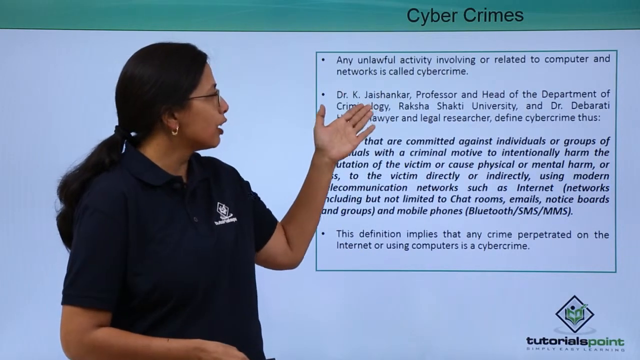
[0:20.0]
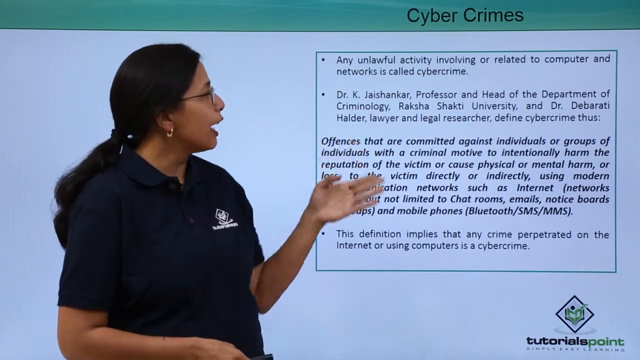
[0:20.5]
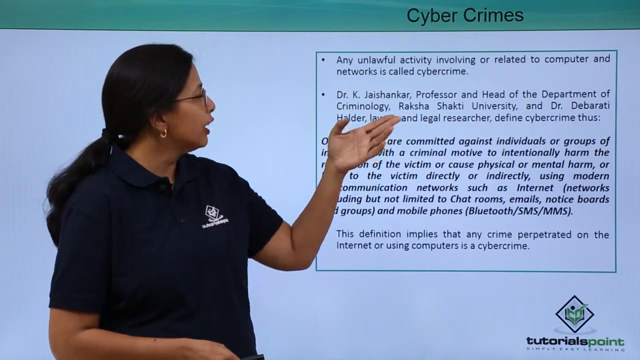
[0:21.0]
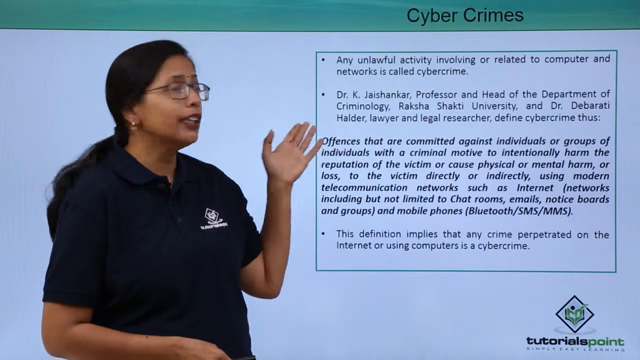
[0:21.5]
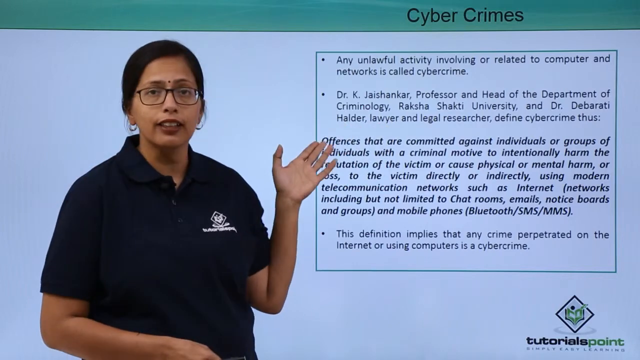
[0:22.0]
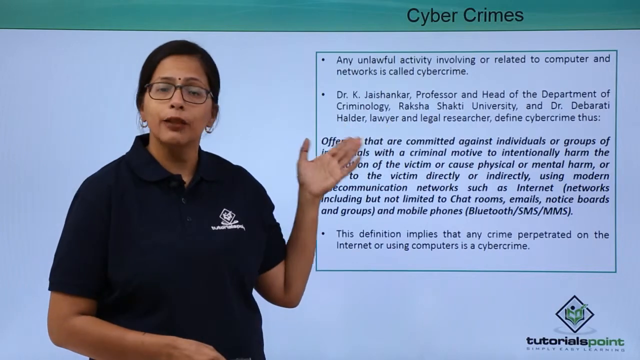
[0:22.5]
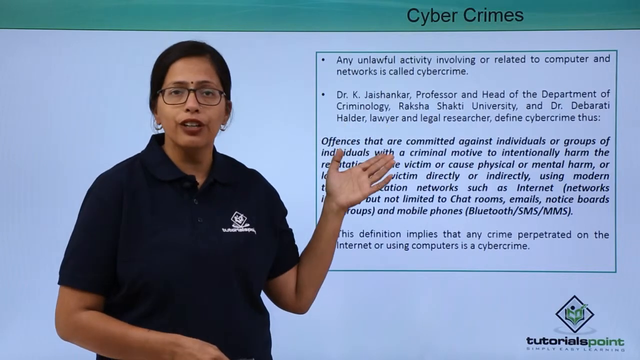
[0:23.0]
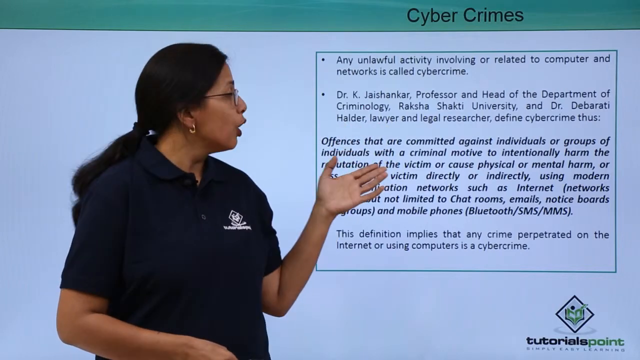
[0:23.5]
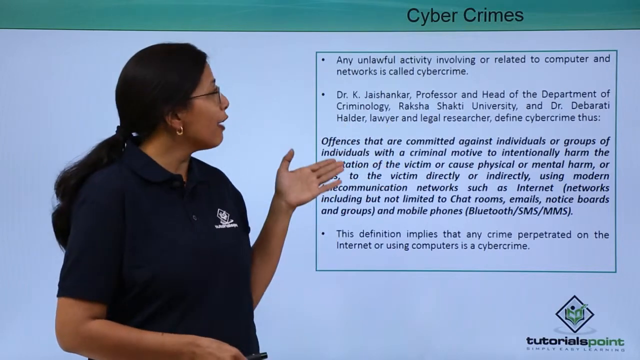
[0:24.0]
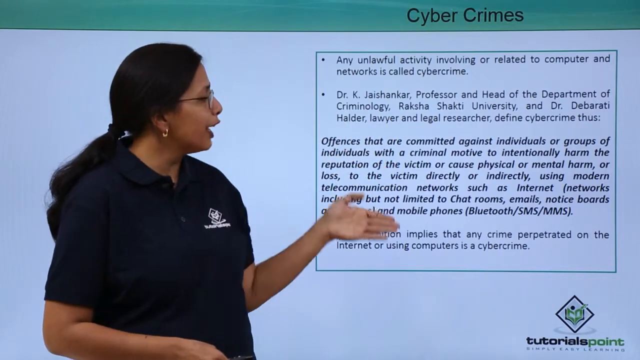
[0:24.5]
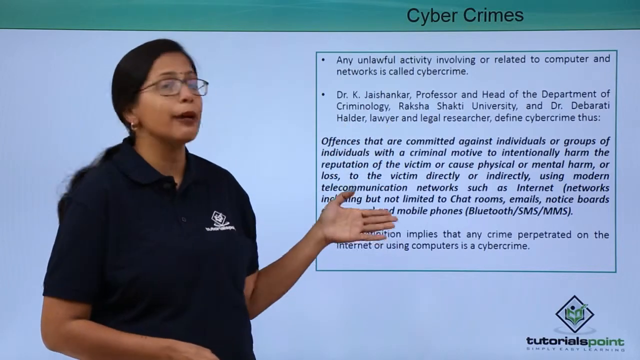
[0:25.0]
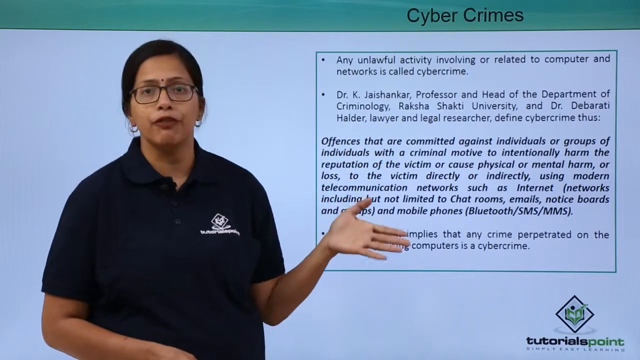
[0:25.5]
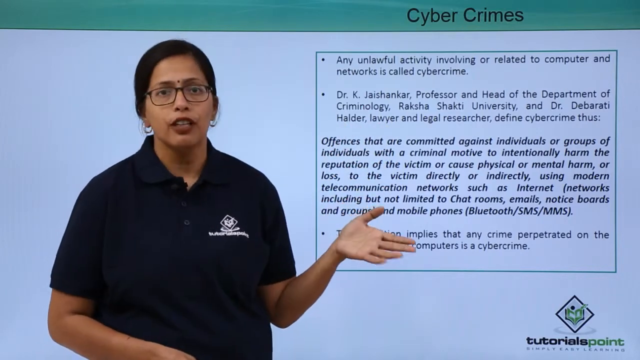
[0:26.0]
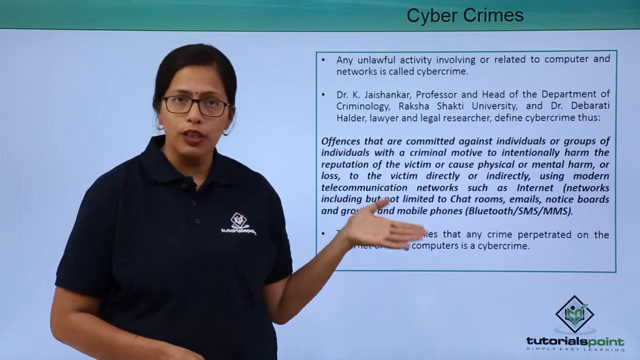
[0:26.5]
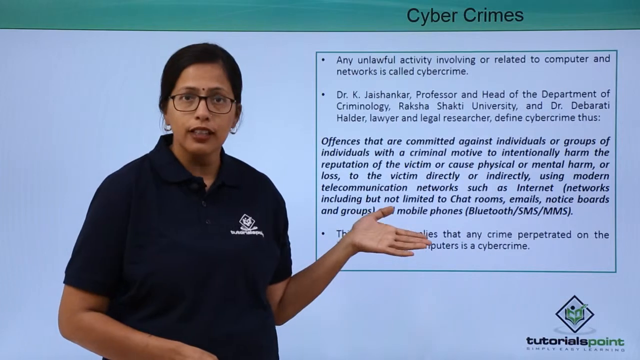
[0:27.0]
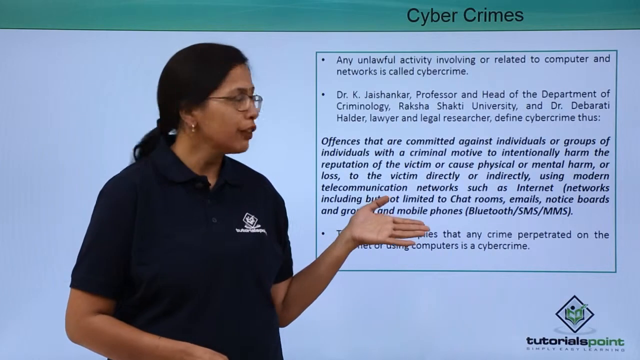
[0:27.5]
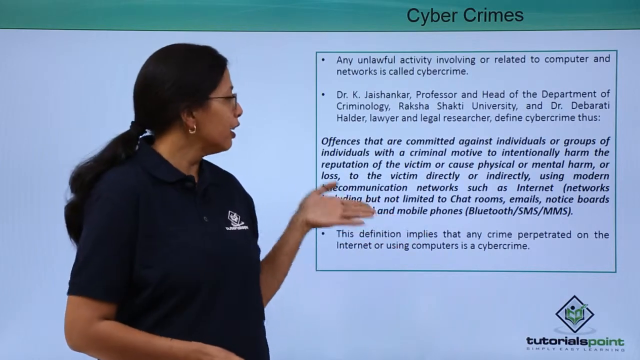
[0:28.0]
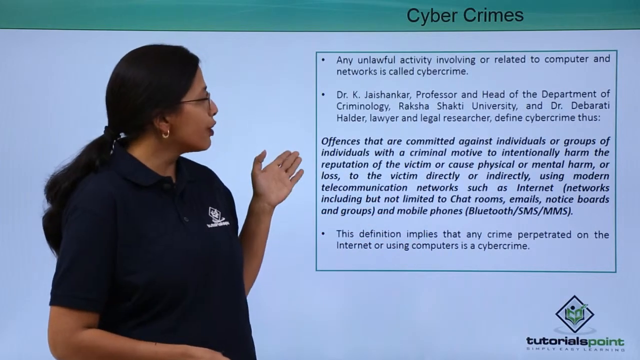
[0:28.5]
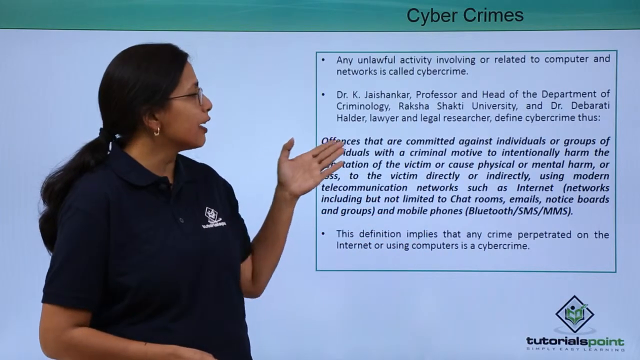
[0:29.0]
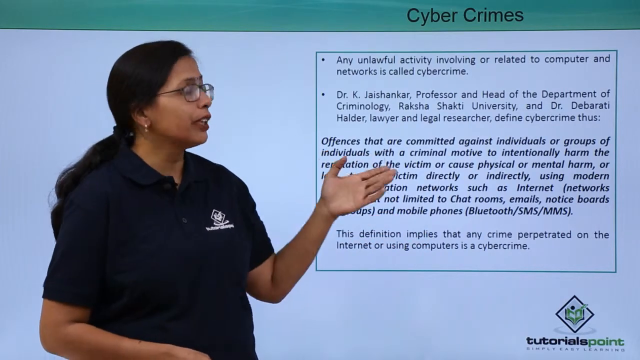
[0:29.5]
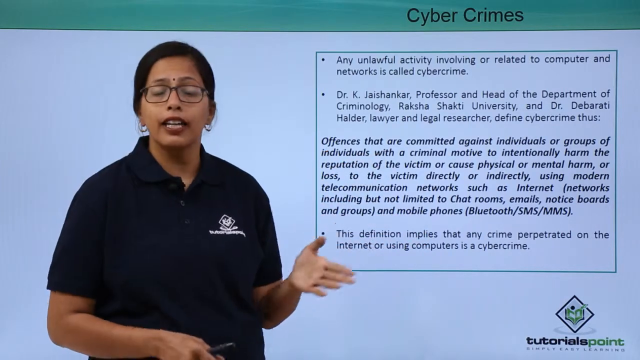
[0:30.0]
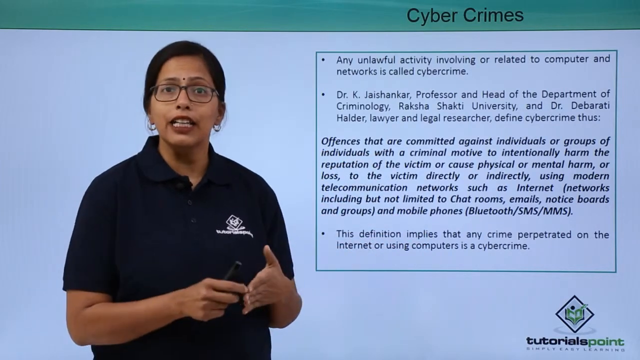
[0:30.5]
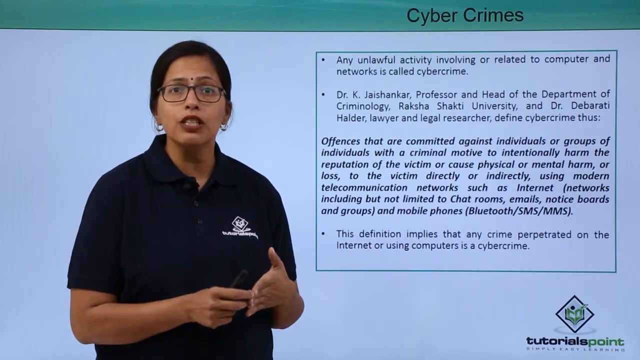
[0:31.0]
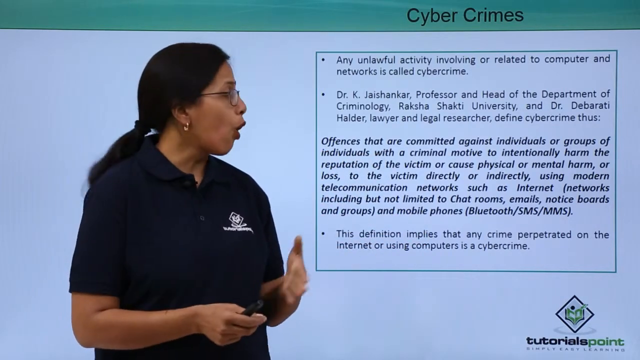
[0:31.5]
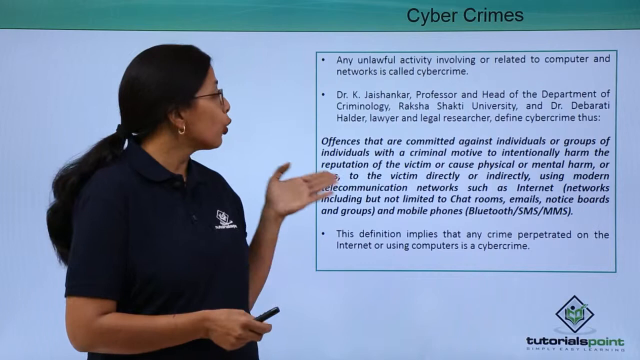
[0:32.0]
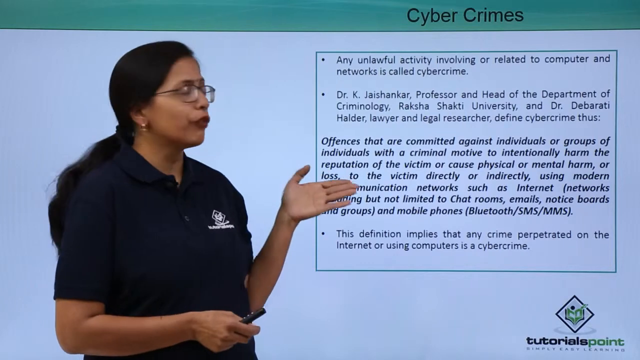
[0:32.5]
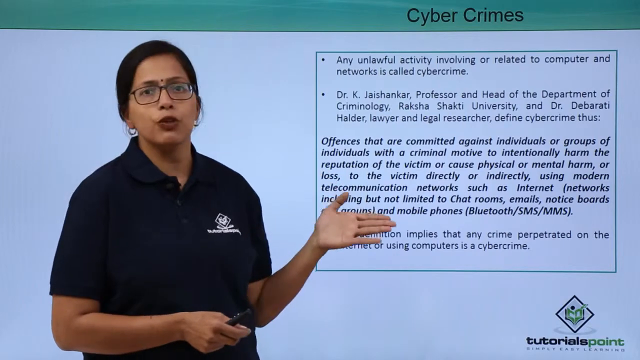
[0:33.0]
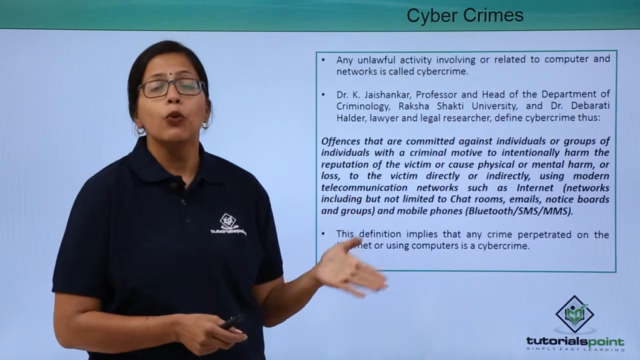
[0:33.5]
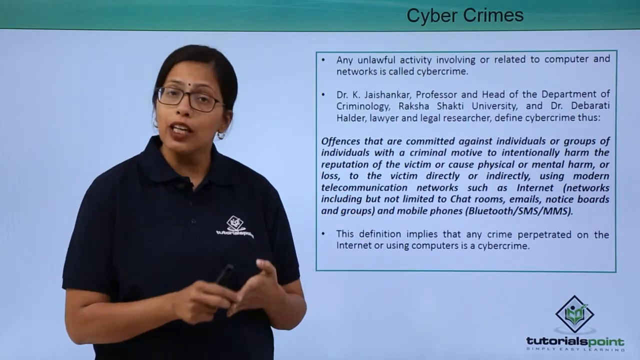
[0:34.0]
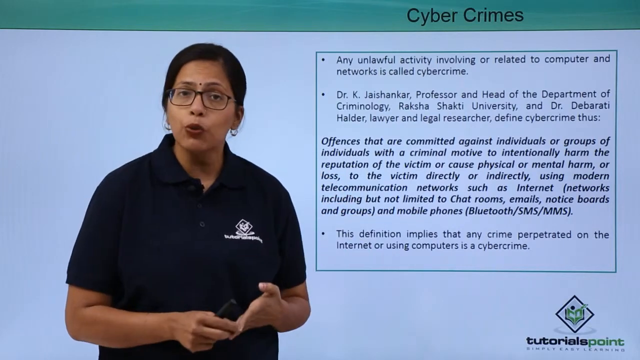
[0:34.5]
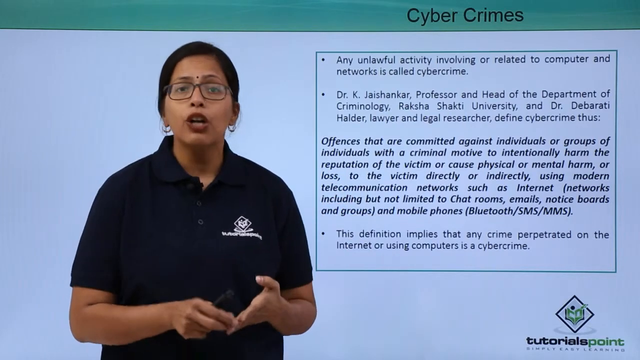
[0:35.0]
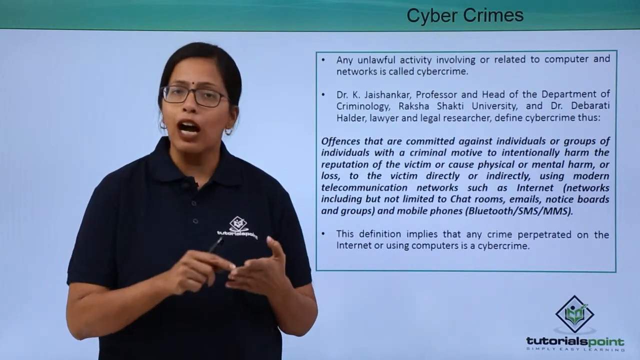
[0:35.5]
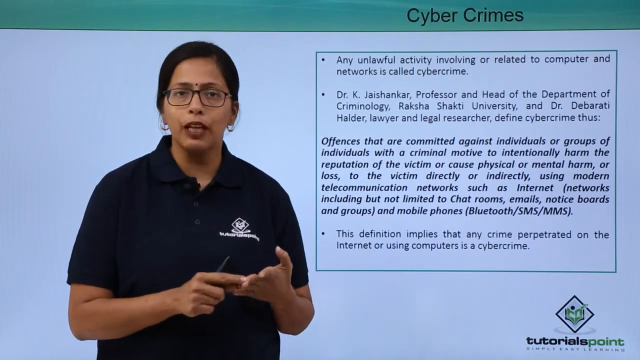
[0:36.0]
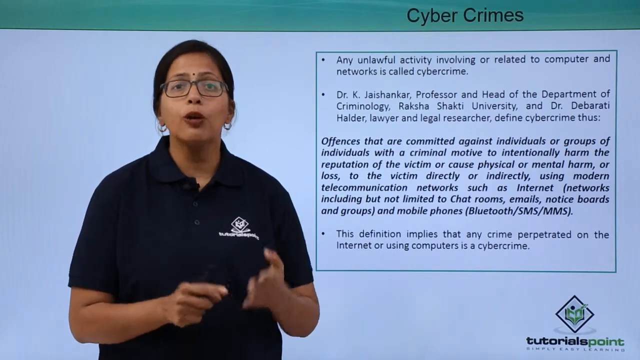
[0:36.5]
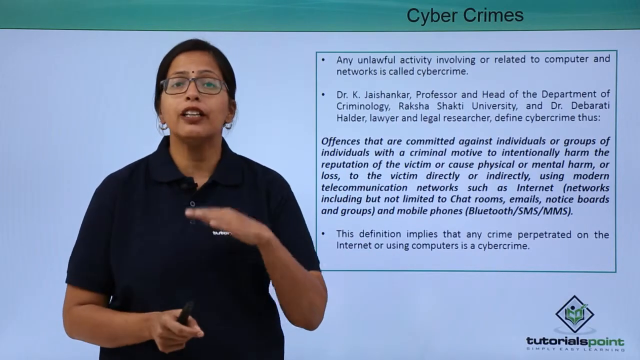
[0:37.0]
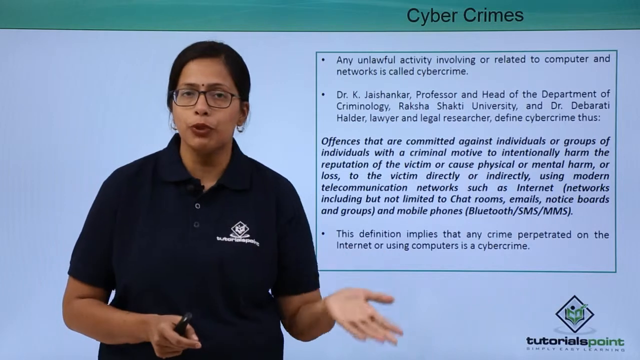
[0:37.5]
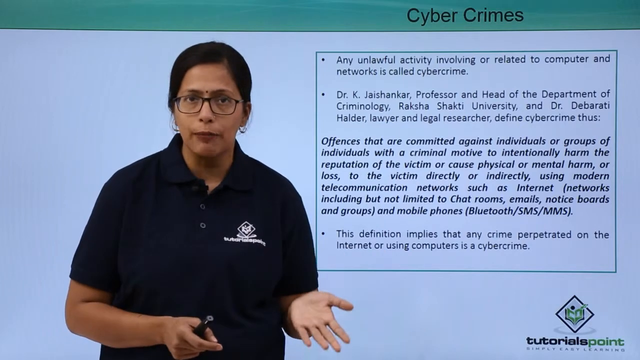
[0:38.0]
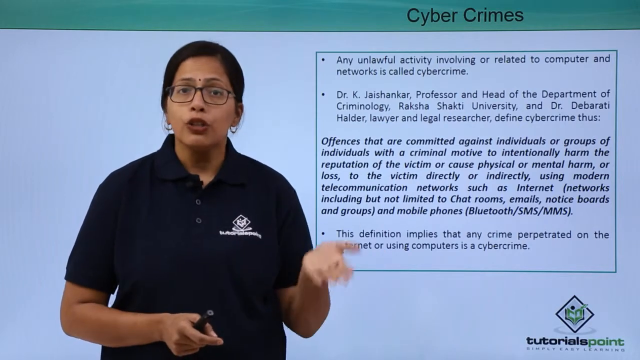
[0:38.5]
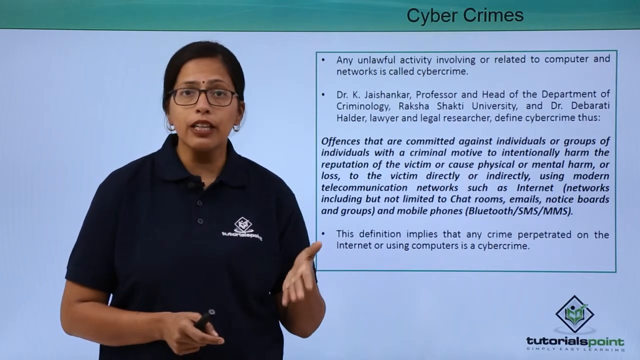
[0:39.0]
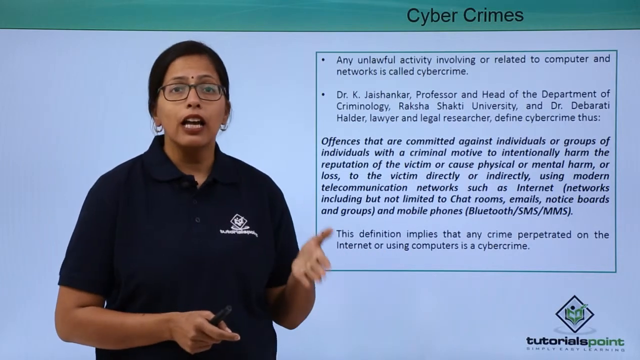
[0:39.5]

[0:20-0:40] The female lecturer for tutorial points presents on cybercrimes. The first slide of her slideshow covers the definitions of cybercrimes. Its first point describes unlawful activity involving or related to computers and networks as cybercrimes. It then quotes various doctors in the field who define cybercrime as acts committed against individuals or groups of individuals with a criminal motive, to intentionally harm the victim or cause physical or mental harm directly or indirectly, using modern telecommunication networks such as internet networks, including chat rooms, emails, notice boards and groups, and mobile phones via Bluetooth, SMS or MMS, implying that any crime perpetrated on the internet or using computers is a cybercrime. The lady turns her back as she goes through the presentation. The slide text is in Calibri and Calibri bold, with the definition in bold italics.